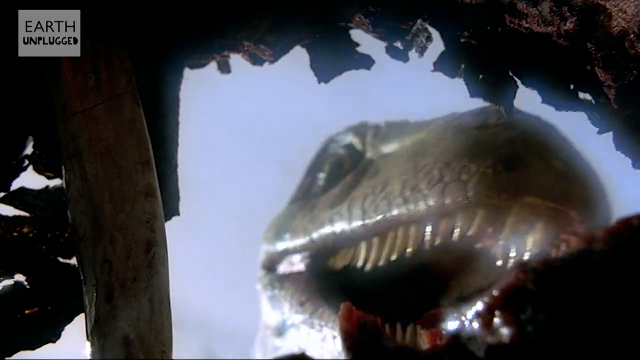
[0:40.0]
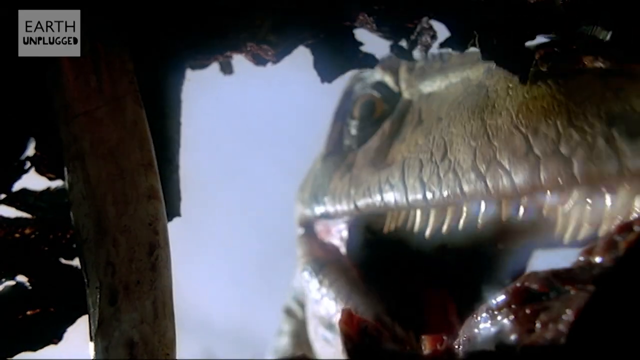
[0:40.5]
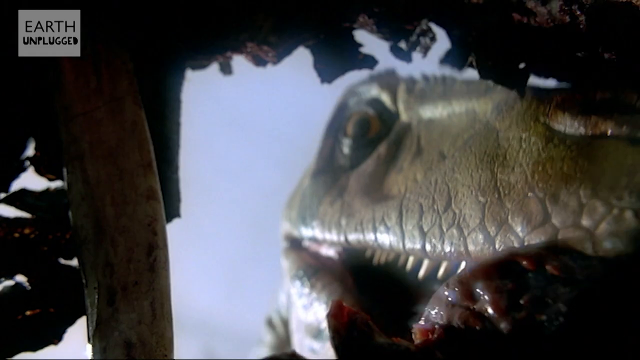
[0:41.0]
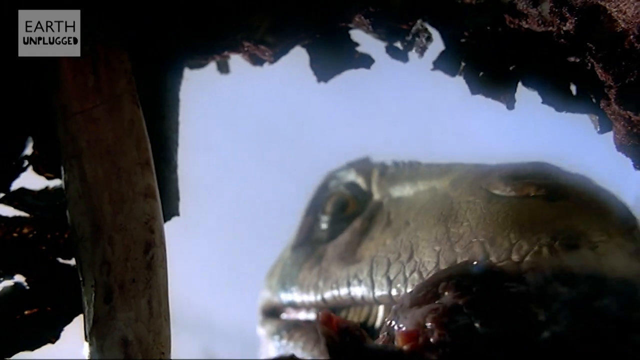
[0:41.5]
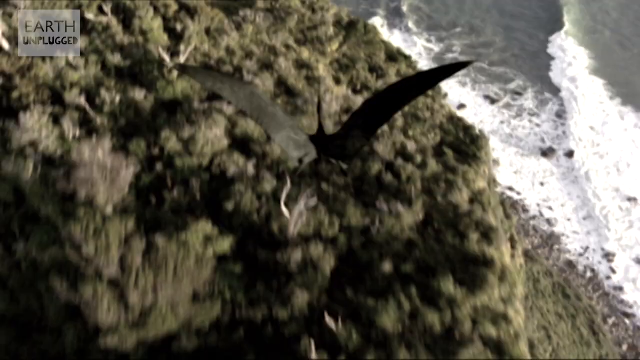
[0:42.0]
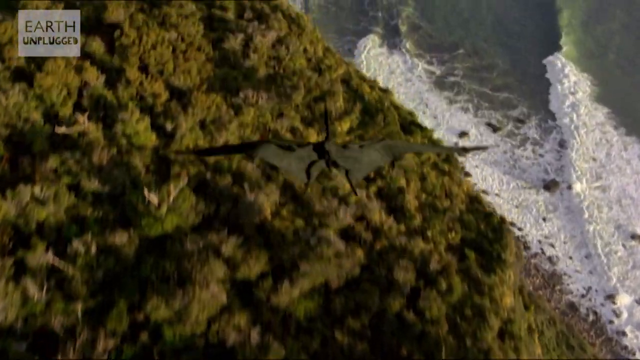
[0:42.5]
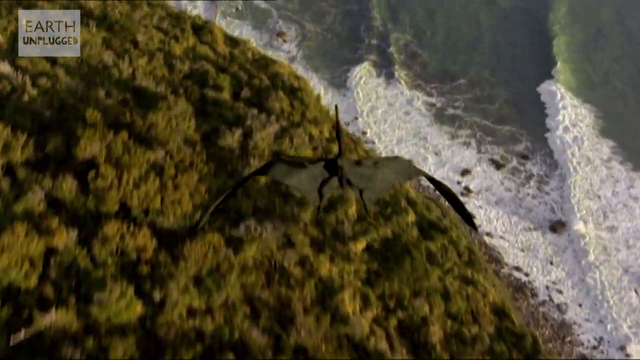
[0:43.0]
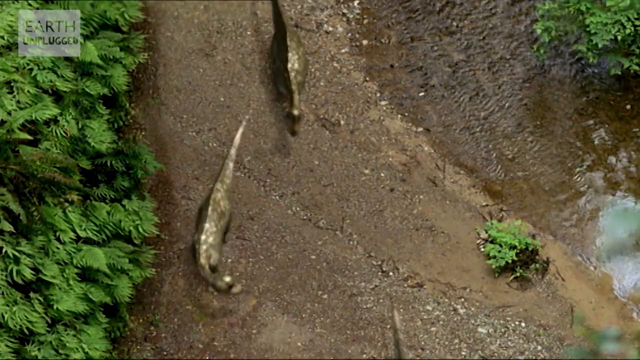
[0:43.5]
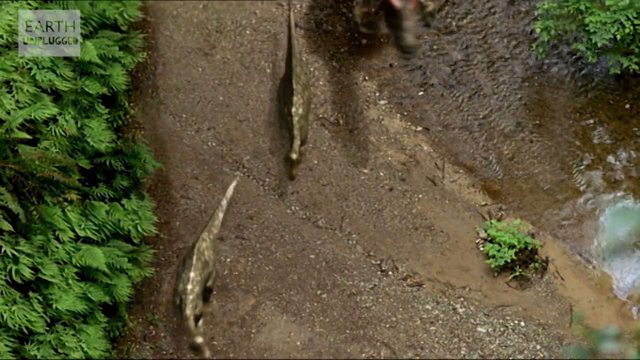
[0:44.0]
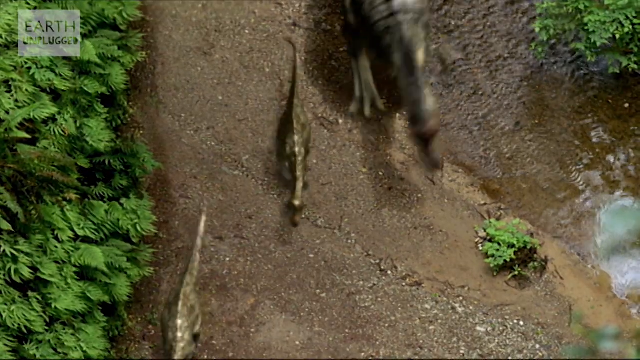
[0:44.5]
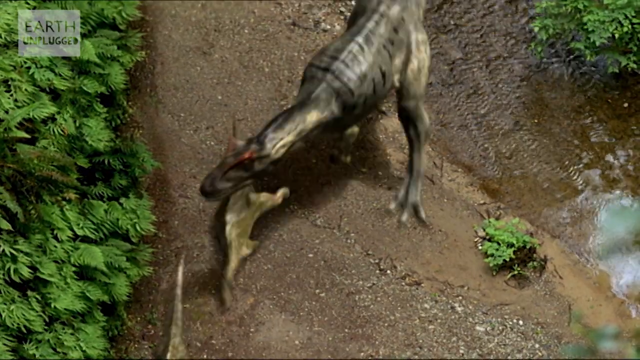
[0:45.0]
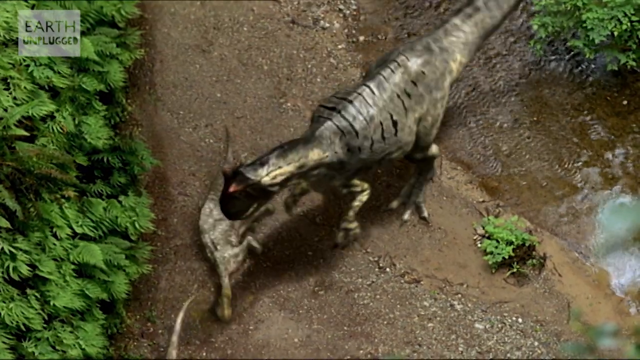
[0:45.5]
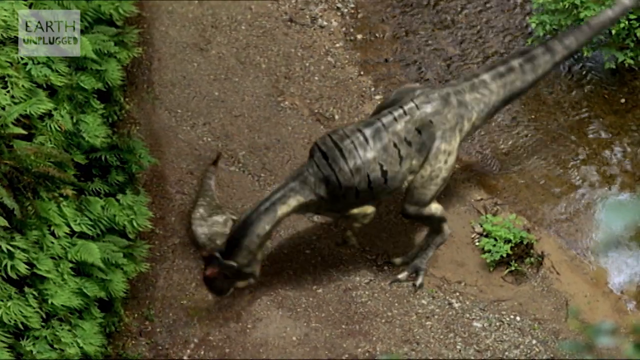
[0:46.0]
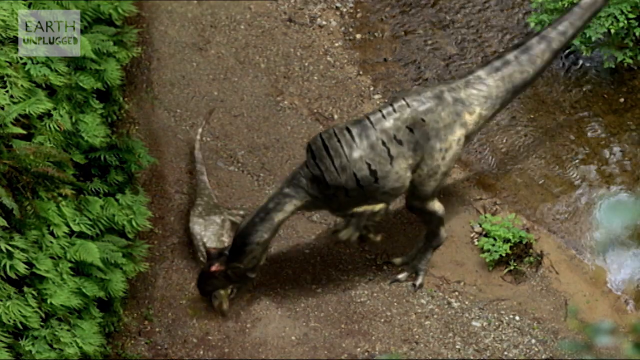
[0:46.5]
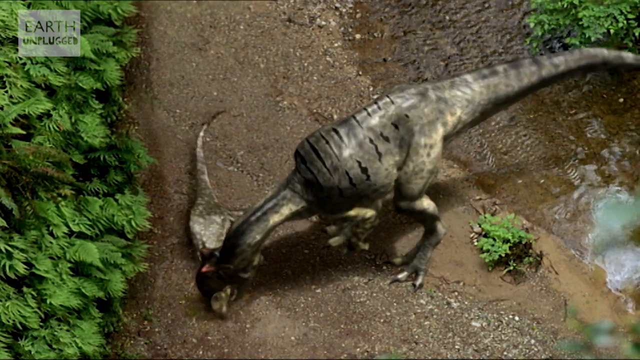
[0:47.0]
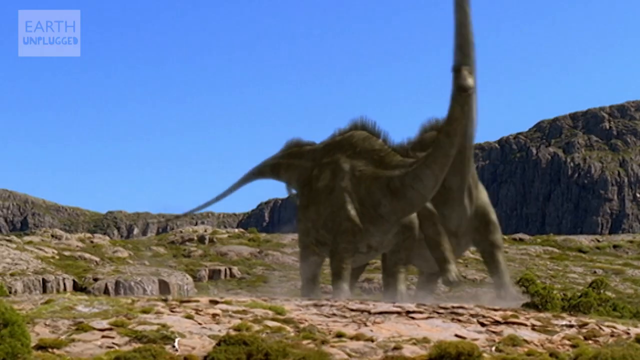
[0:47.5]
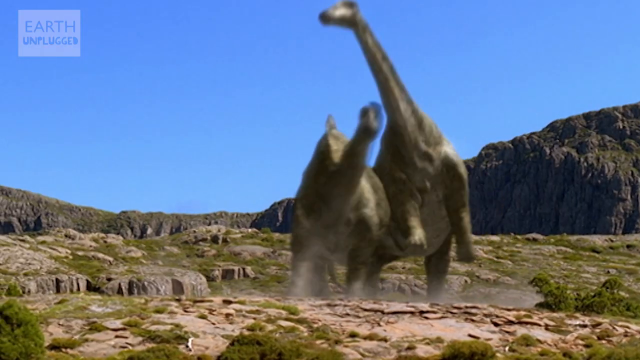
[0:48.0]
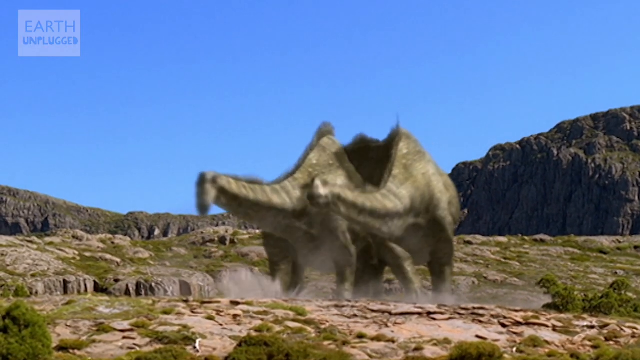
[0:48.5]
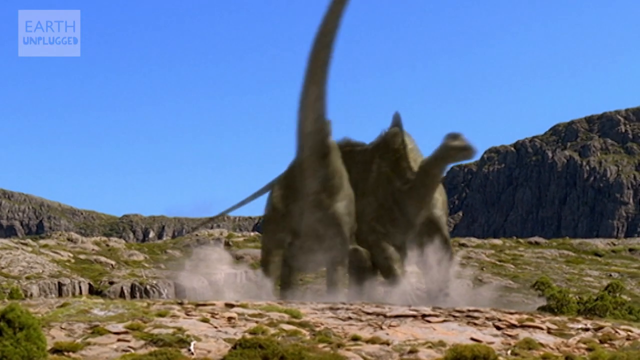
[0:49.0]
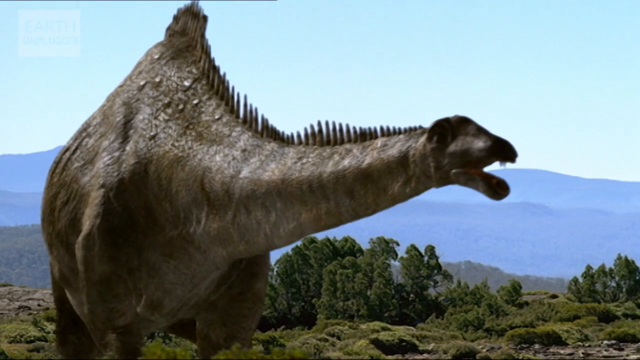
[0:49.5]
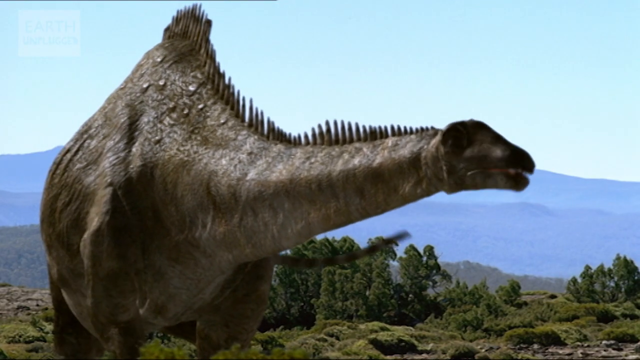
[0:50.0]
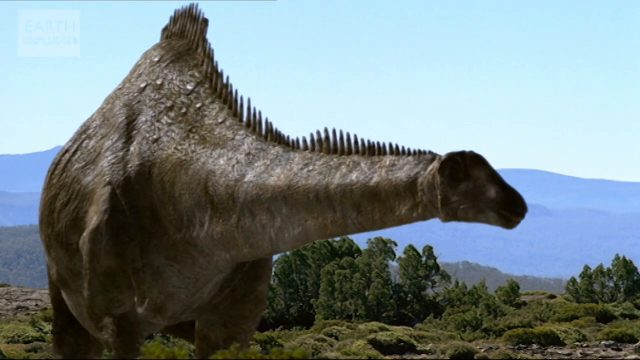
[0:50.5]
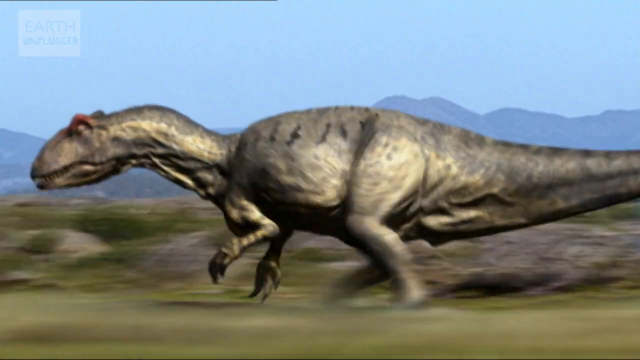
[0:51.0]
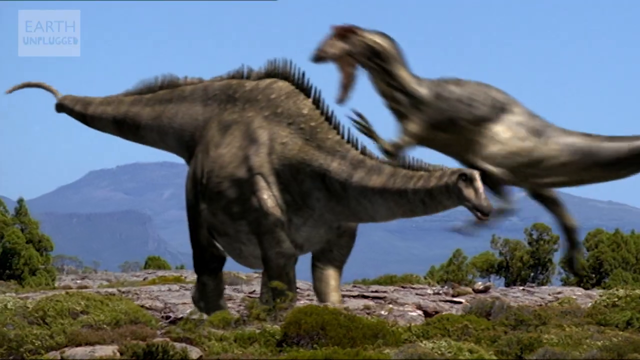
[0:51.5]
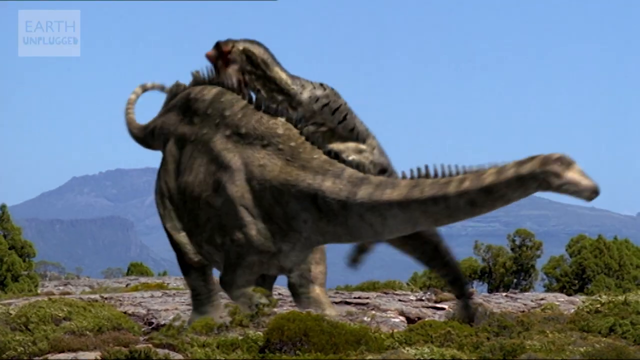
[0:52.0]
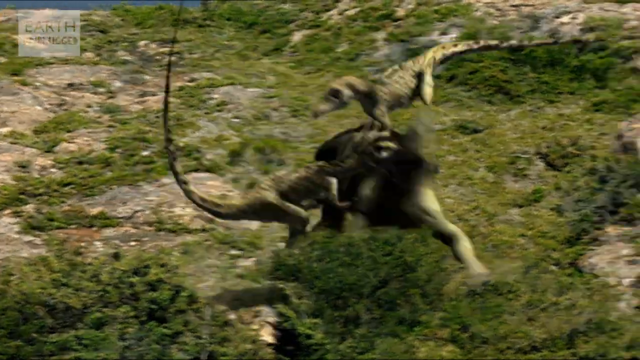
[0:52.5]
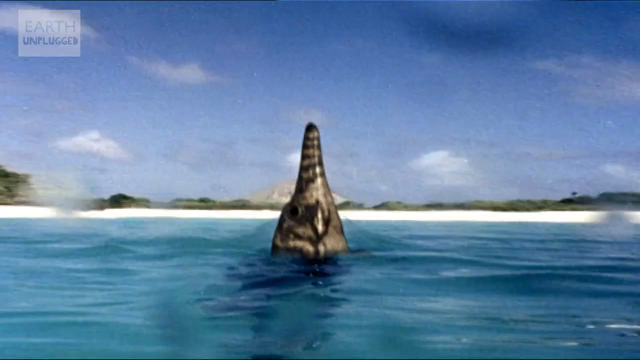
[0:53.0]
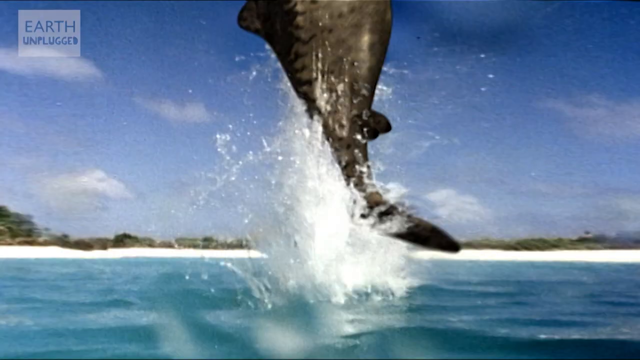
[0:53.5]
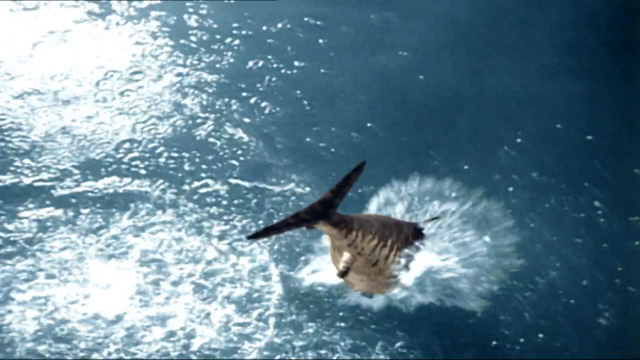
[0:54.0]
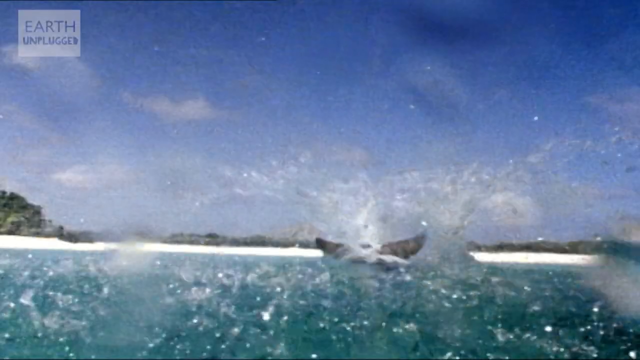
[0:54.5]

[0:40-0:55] The velociraptor eating the carcass is shown very briefly. Then an aerial shot of the beach area shows a pterodactyl flying. About three small dinosaurs walk the beach area, and a bigger dinosaur knocks one over and bites its neck. In the next scene, two dinosaurs bump into each other and fight, most likely over territory. The shot then focuses on just one dinosaur, which appears to be nodding, on the mountains. A bigger dinosaur runs fast and jumps to attack a dinosaur. It cuts to another scene where a bigger dinosaur and two smaller ones, probably velociraptors, are jumping on and attacking that dinosaur. Then an aquatic animal that looks kind of like a dolphin jumps out of the water and goes back in. Most of this takes place in the mountain area, with a lot of greenery: mountains, hills, and trees.